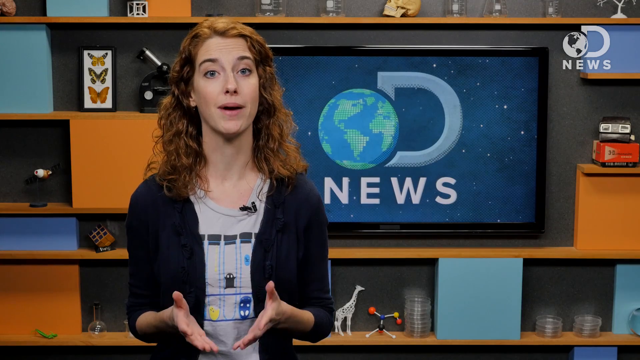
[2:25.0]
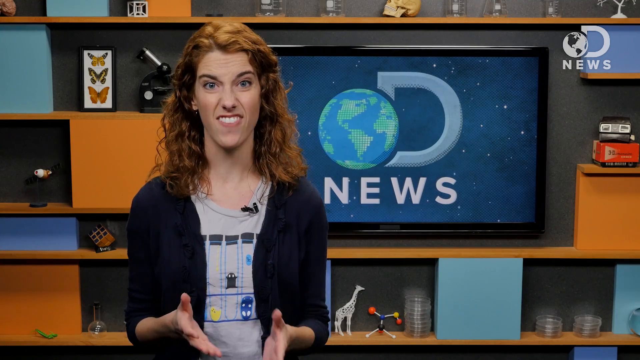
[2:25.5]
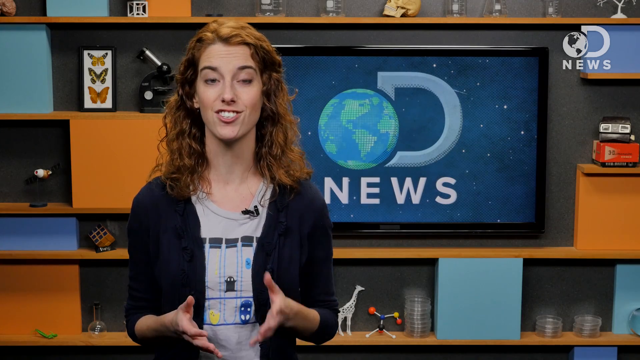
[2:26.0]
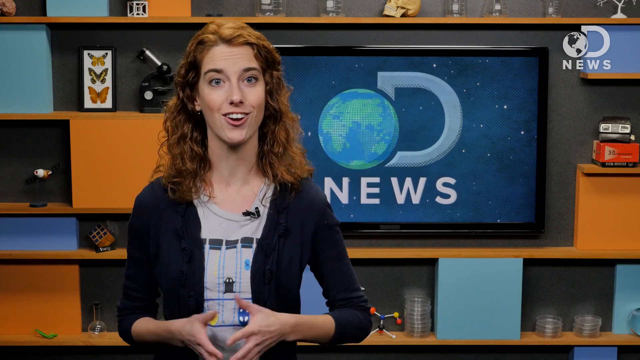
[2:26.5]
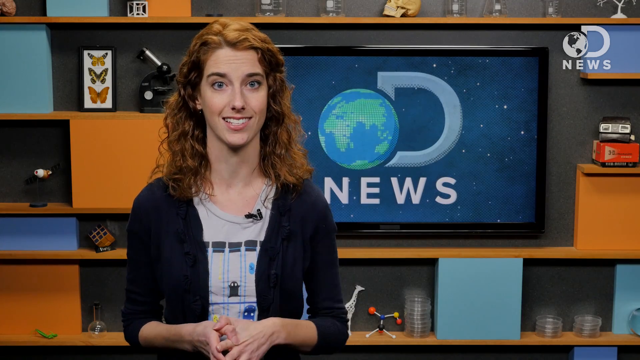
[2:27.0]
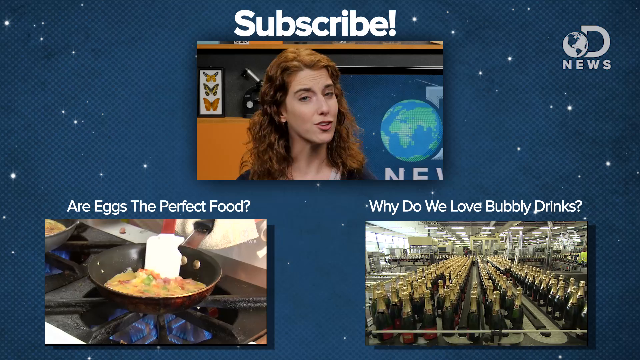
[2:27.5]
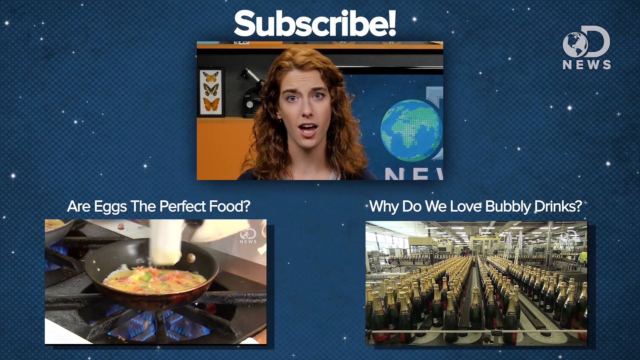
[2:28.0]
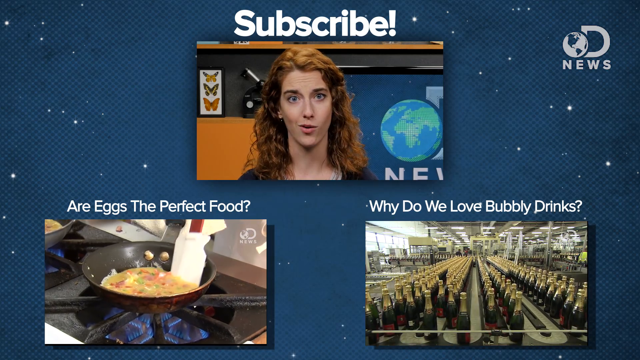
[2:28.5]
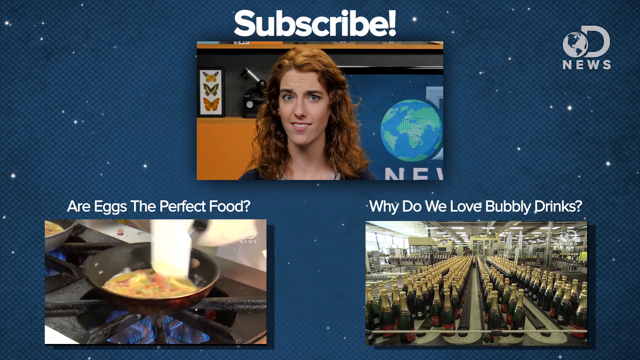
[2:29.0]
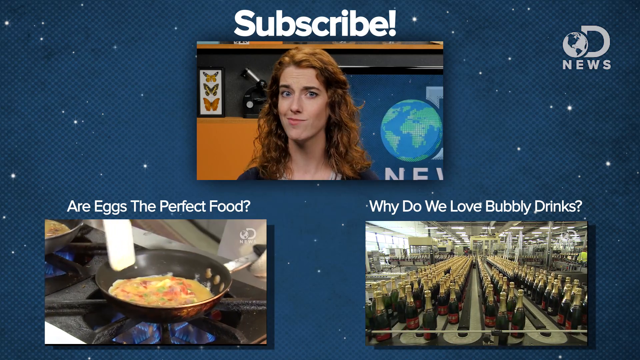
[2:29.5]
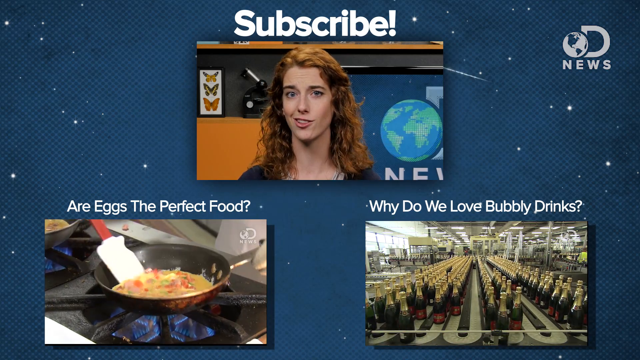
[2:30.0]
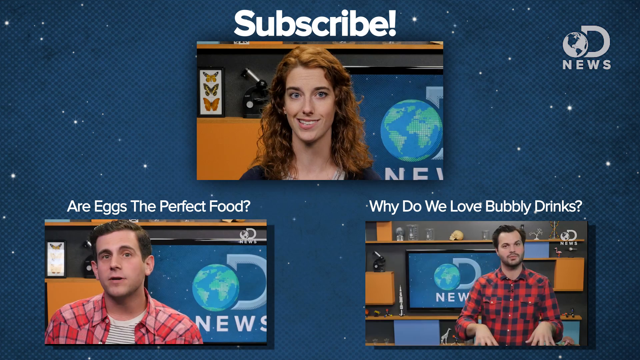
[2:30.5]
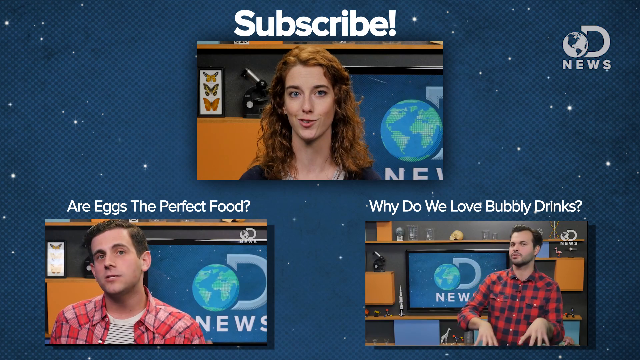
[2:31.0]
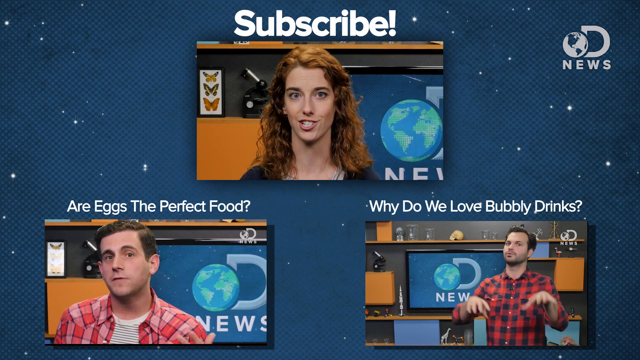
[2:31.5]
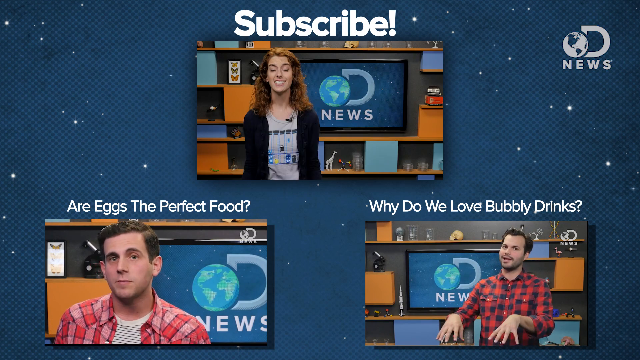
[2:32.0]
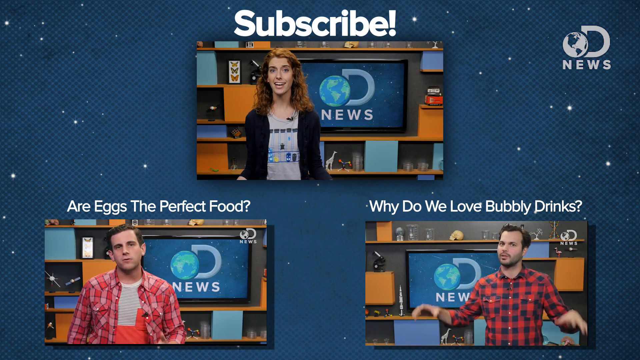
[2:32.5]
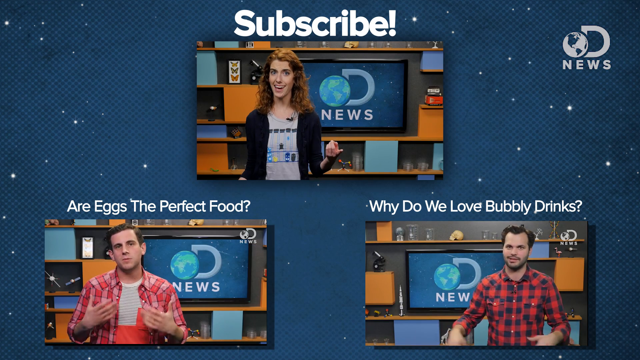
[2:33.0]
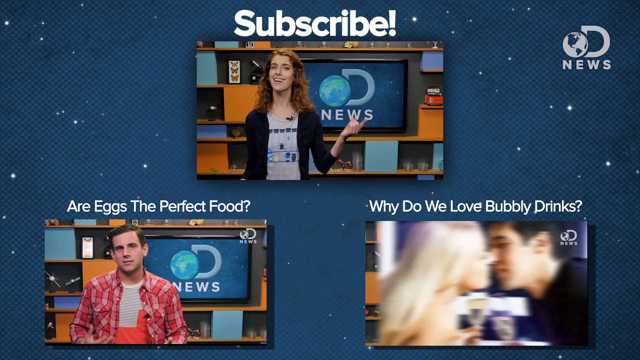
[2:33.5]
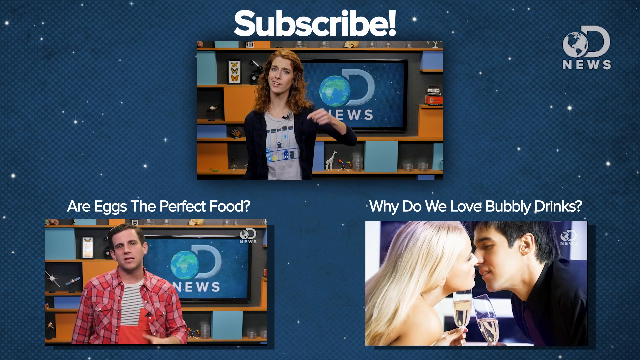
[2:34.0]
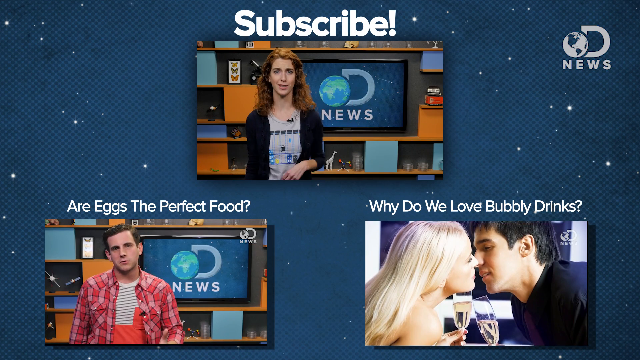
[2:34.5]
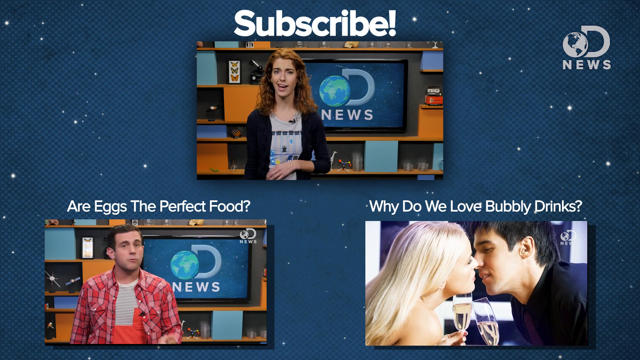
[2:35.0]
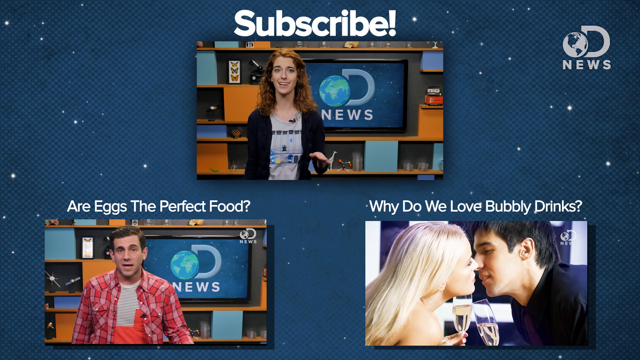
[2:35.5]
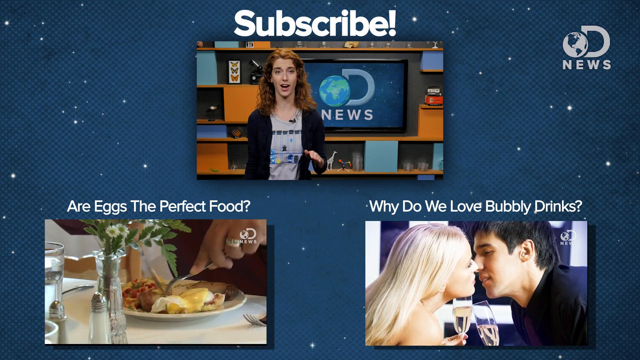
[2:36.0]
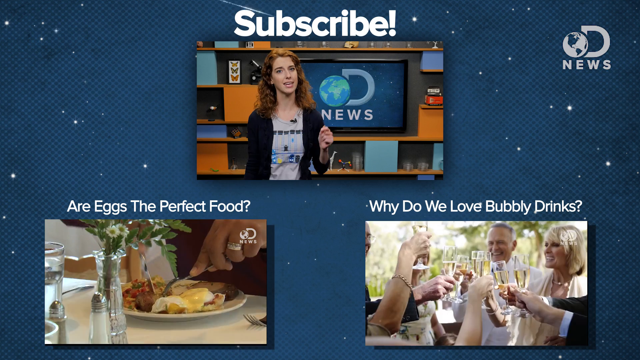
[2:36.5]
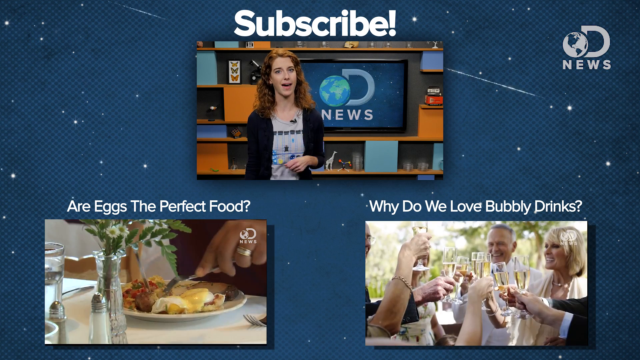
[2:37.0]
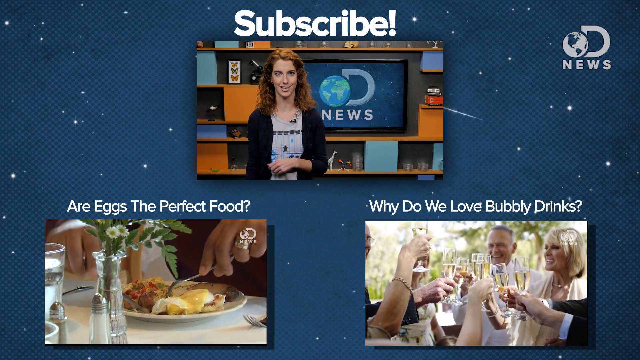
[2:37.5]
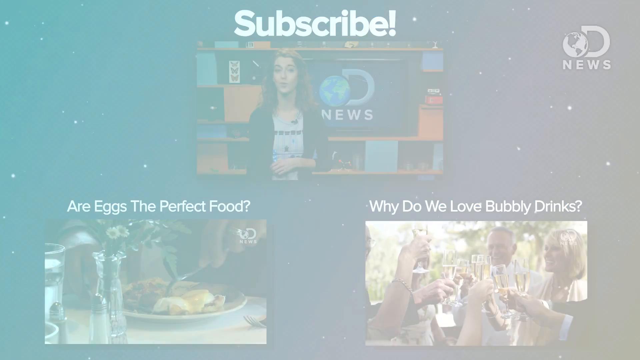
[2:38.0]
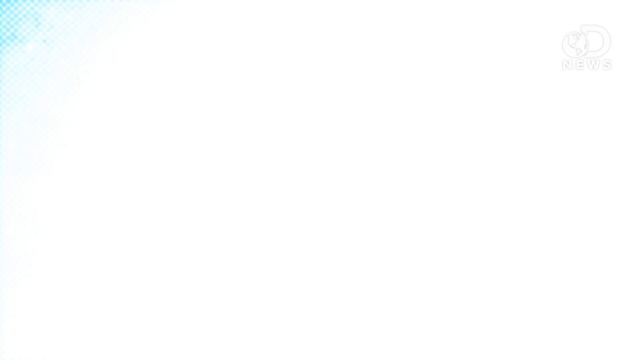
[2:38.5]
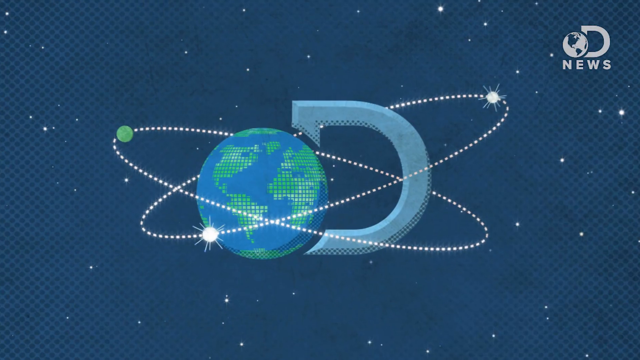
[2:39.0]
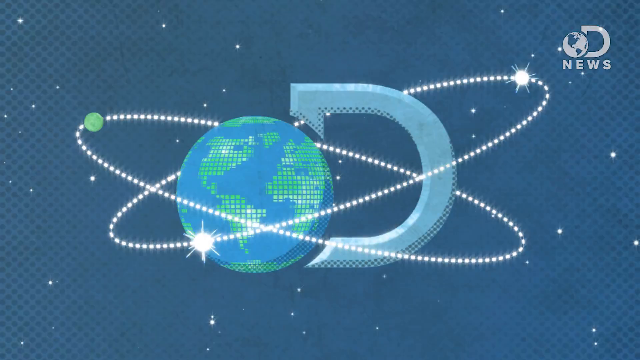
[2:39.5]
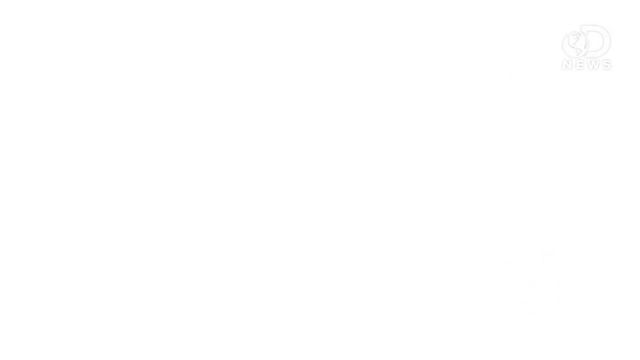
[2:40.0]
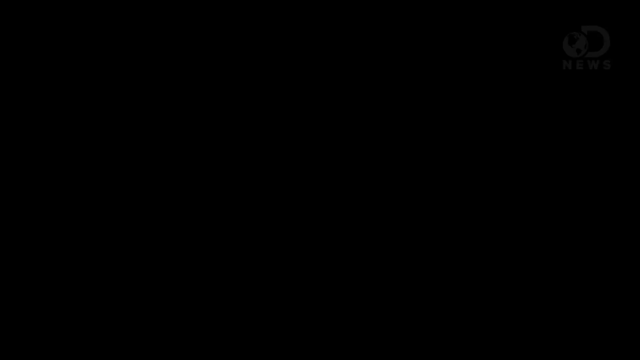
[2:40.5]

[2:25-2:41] A single woman with red hair, white skin and blue eyes appears to be standing in a studio, talking directly to the camera. The studio behind her has light blue, dark blue, orange and black. Over her left shoulder is a large TV monitor displaying the word "news" on a celestial-looking blue background, with a spinning globe that kind of functions as an icon. The video cuts to different clips, and after the woman finishes talking, the news station logo with the spinning globe is shown on the screen as the video ends.